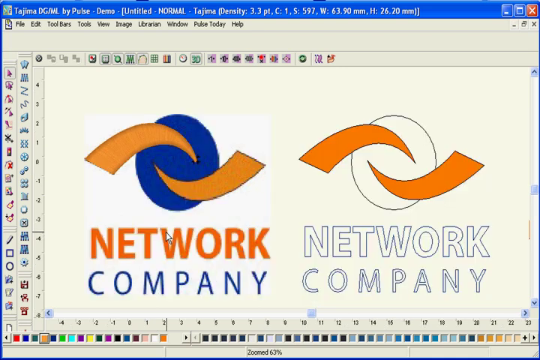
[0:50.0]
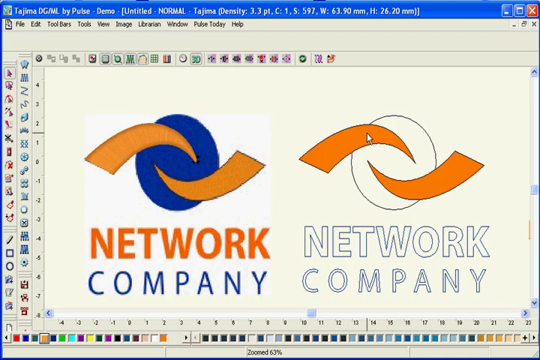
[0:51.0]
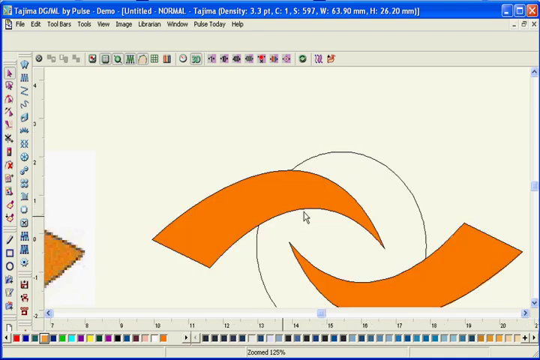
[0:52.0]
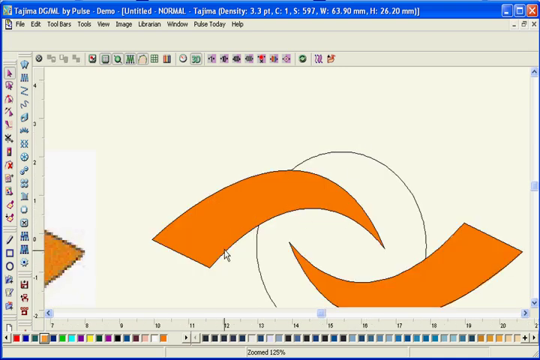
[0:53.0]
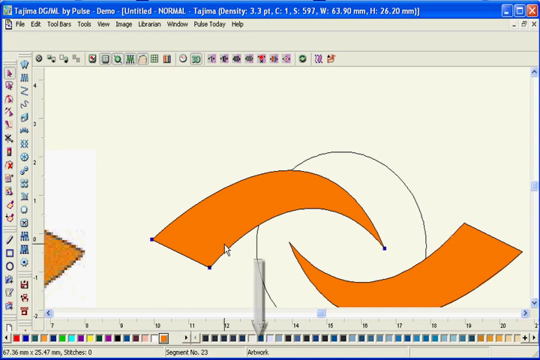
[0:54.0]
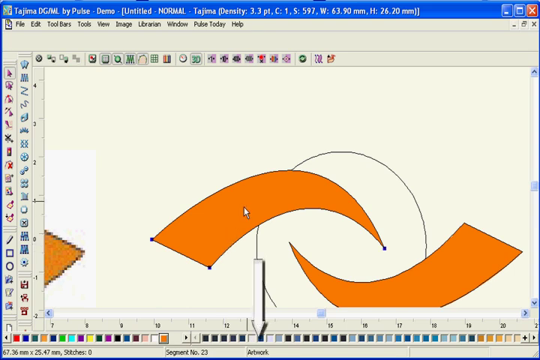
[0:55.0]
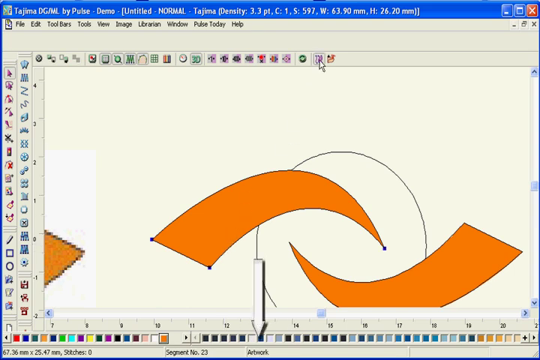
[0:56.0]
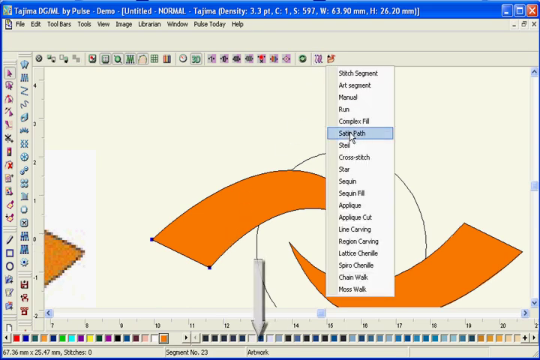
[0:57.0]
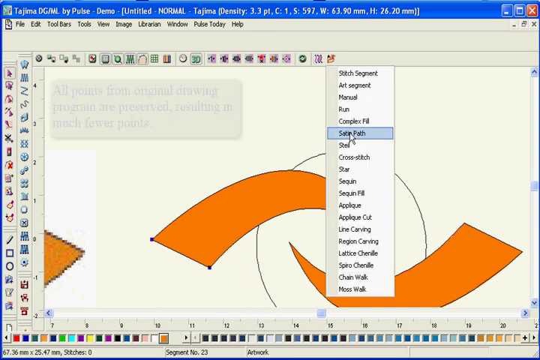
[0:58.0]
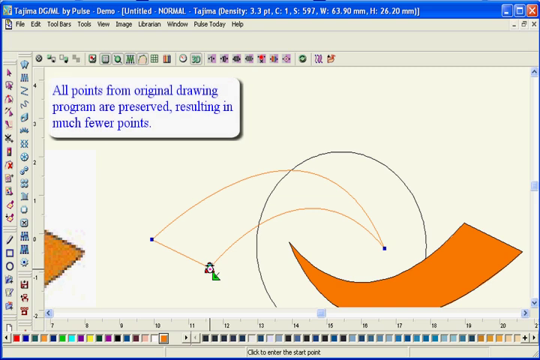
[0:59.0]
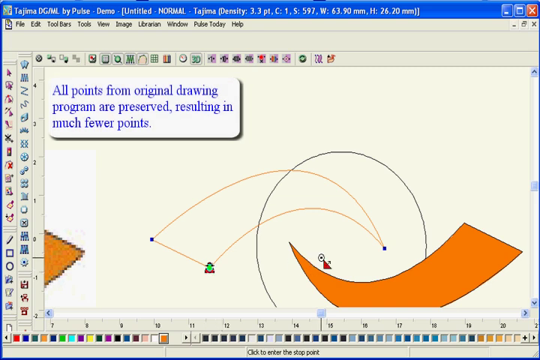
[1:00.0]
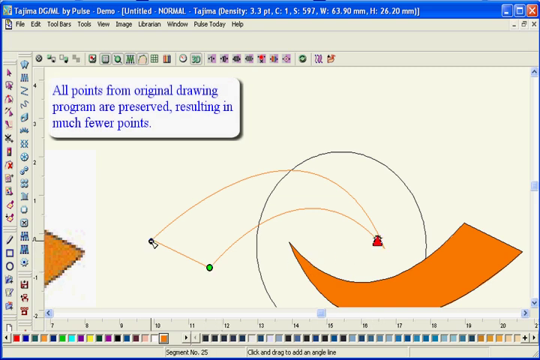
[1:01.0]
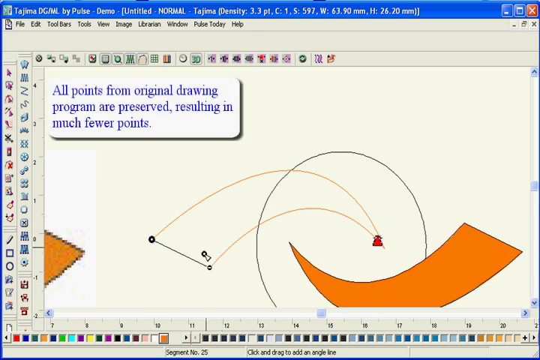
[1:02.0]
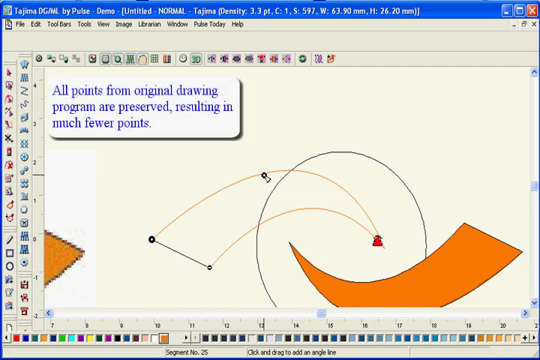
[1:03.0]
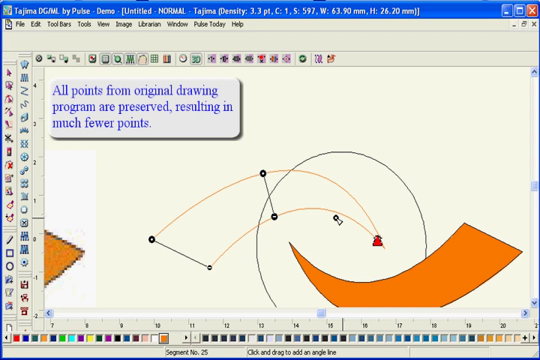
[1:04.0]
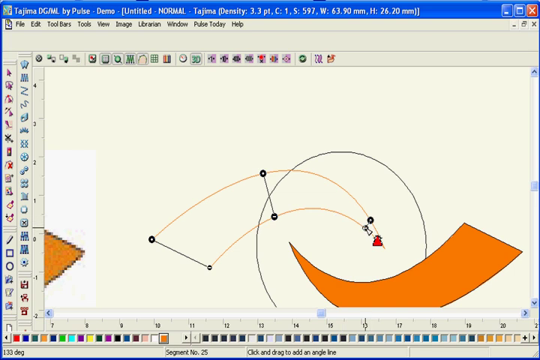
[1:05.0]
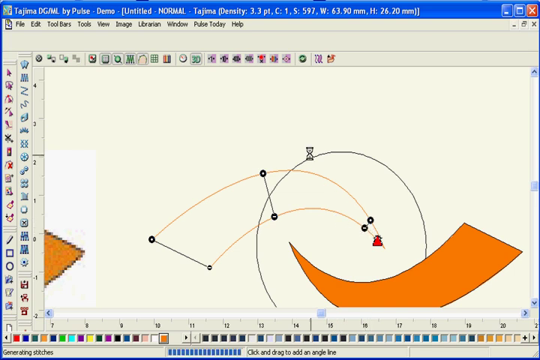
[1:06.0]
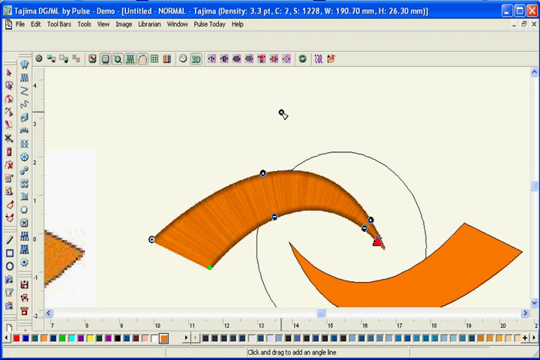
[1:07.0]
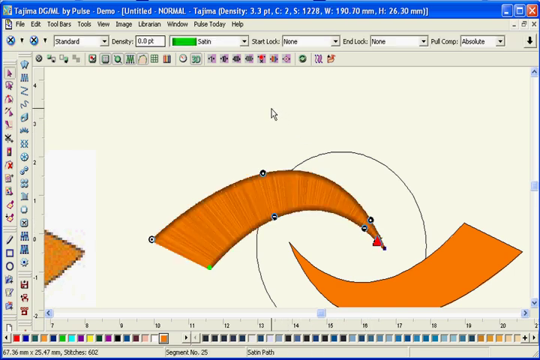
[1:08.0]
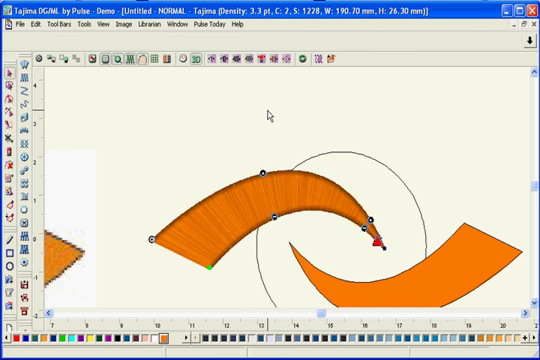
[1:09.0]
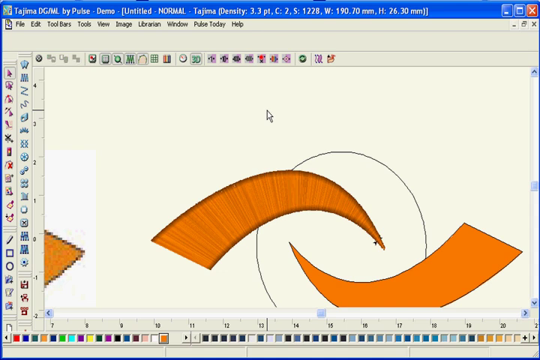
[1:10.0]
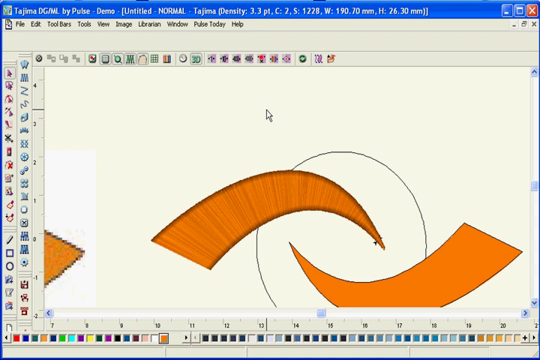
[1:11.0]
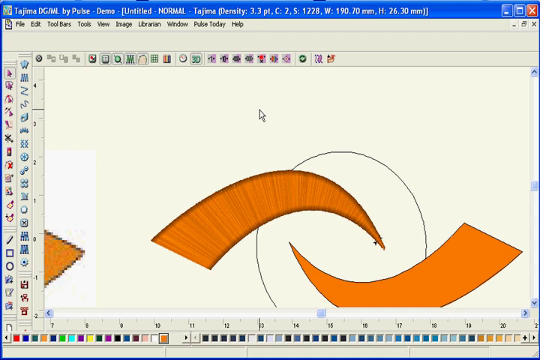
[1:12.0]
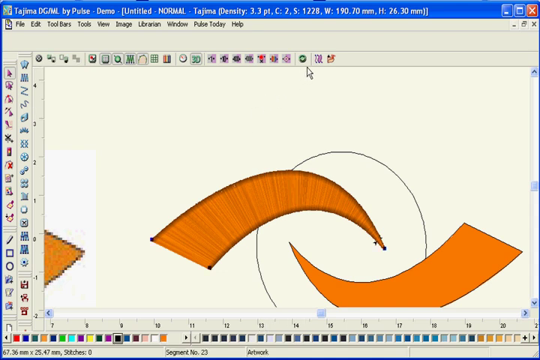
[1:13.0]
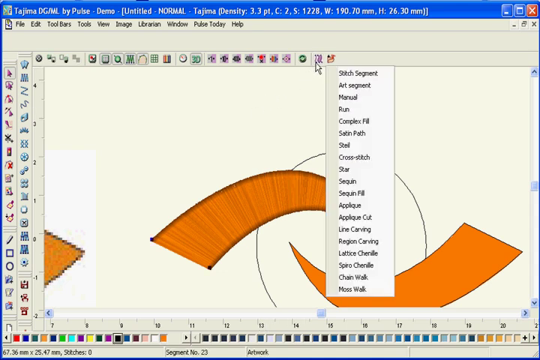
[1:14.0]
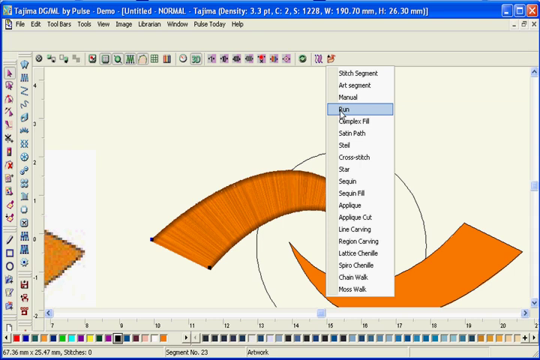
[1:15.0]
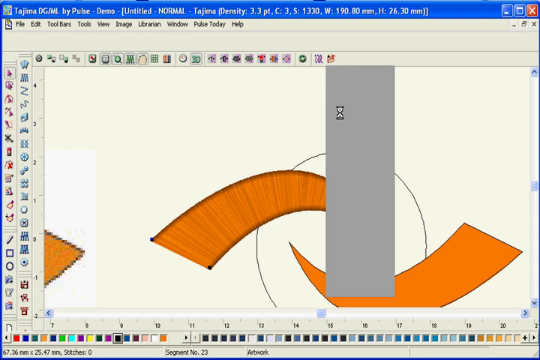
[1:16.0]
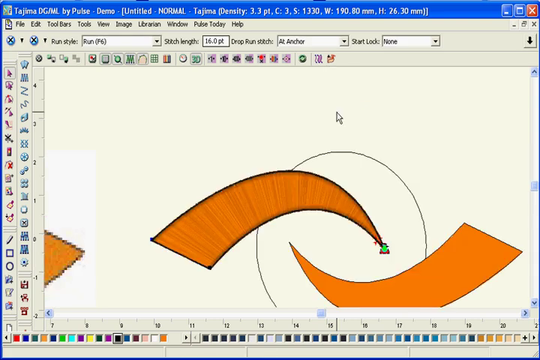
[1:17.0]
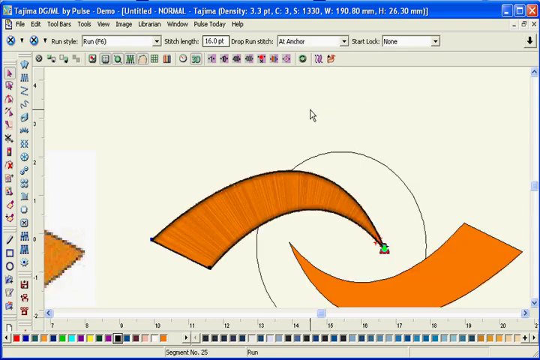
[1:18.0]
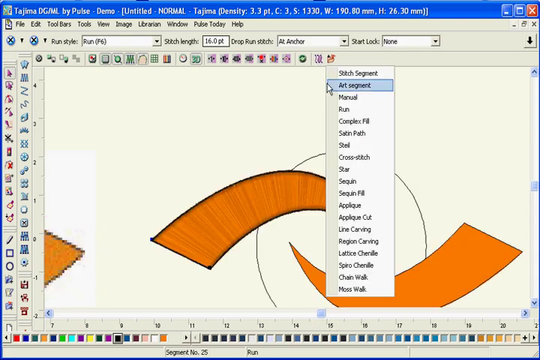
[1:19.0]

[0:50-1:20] The computer screen shows "Network Company" pulled up on the main screen, and there are two of these. Above the text is a design of a blue sphere with two orange angular shapes swirling into it, getting smaller from the outside until they point into the blue sphere. The top one swirls from bottom to top to bottom, and the bottom one swirls from top to bottom back to top again. Underneath, "Network" is in orange and "Company" is in blue. The second "Network Company" on the right side is the same except that the sphere is not blue and the lettering is just white.